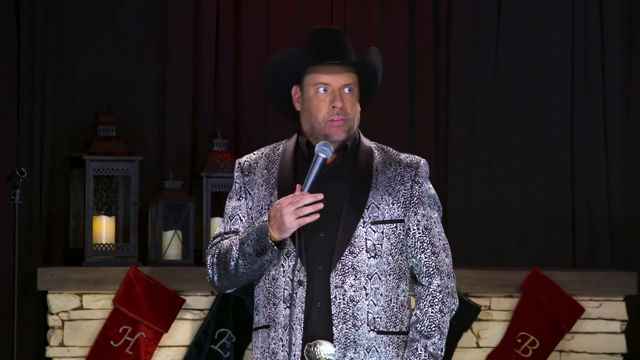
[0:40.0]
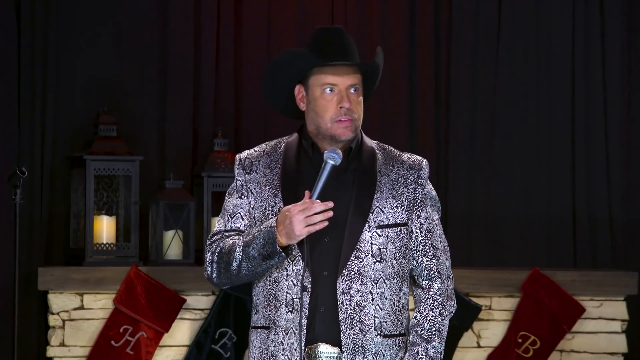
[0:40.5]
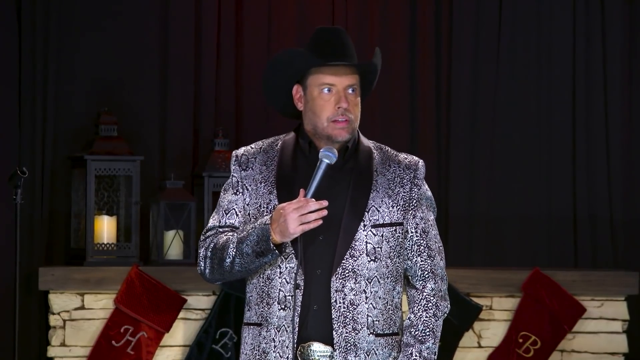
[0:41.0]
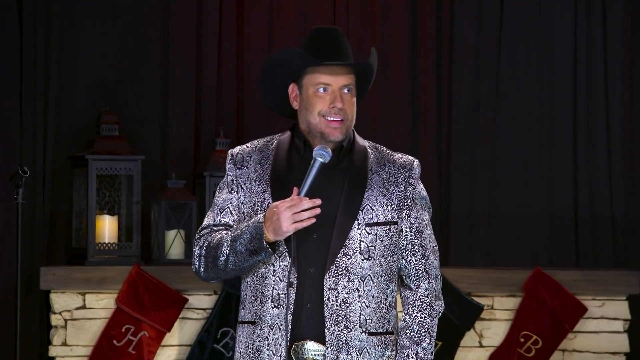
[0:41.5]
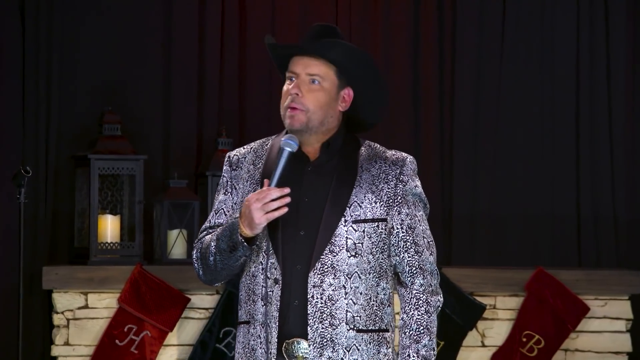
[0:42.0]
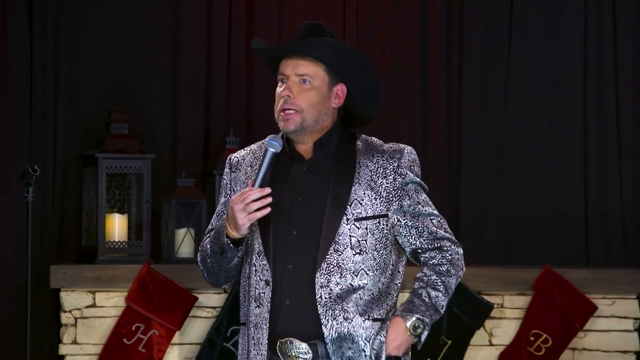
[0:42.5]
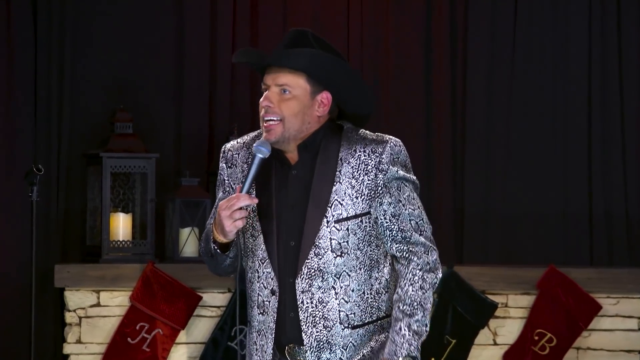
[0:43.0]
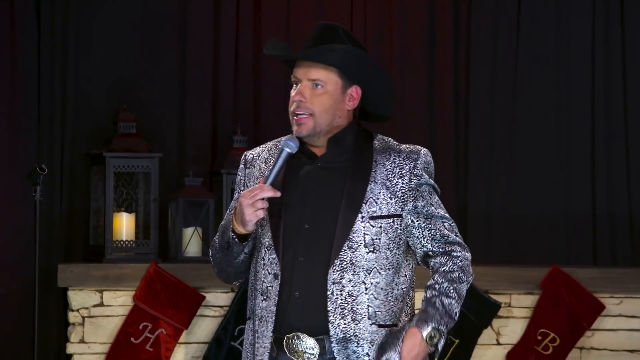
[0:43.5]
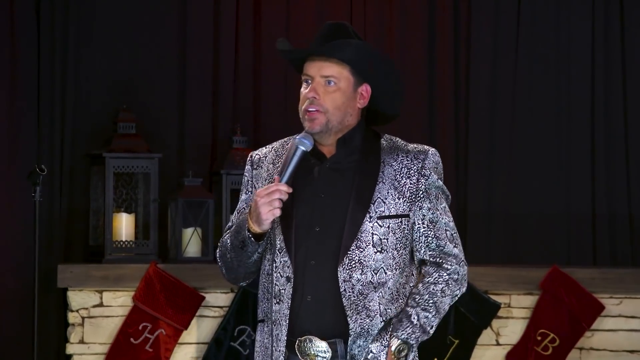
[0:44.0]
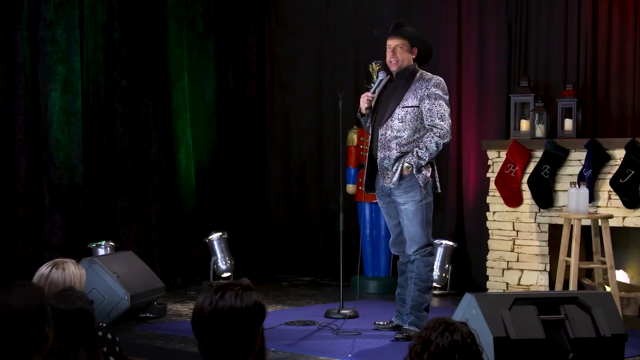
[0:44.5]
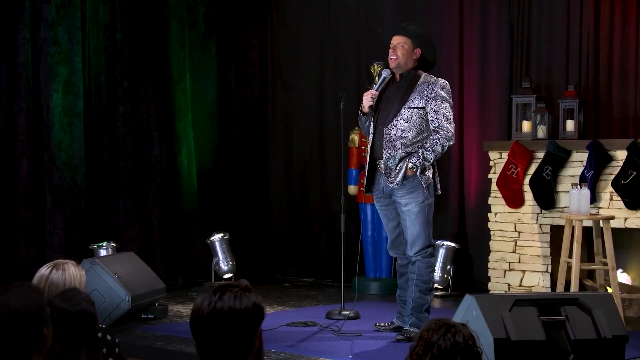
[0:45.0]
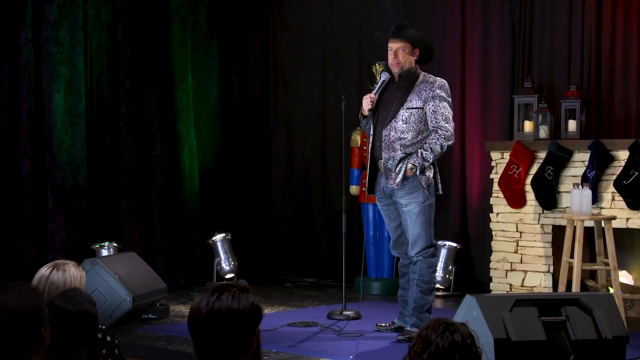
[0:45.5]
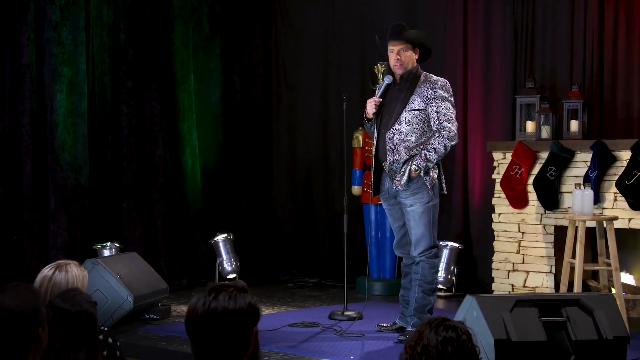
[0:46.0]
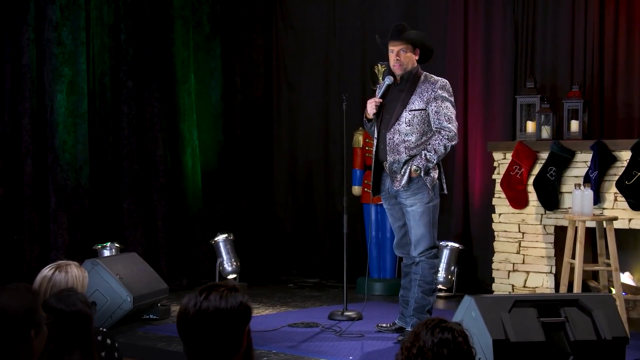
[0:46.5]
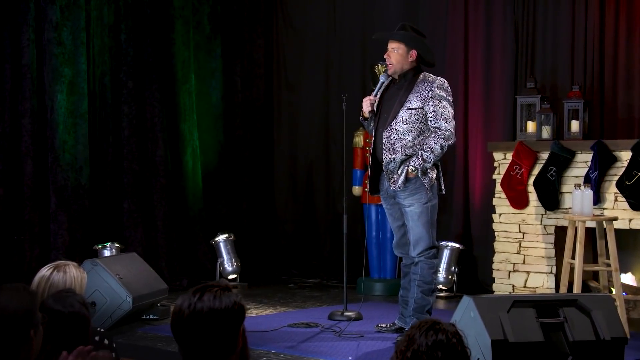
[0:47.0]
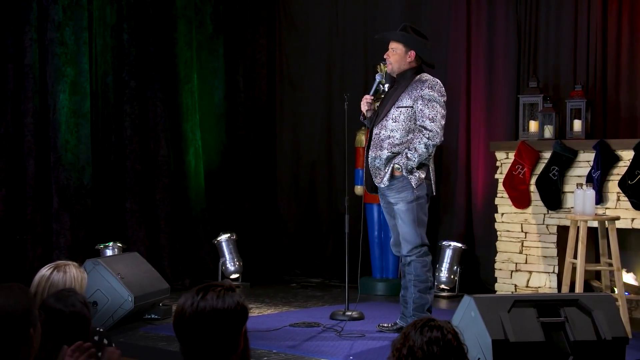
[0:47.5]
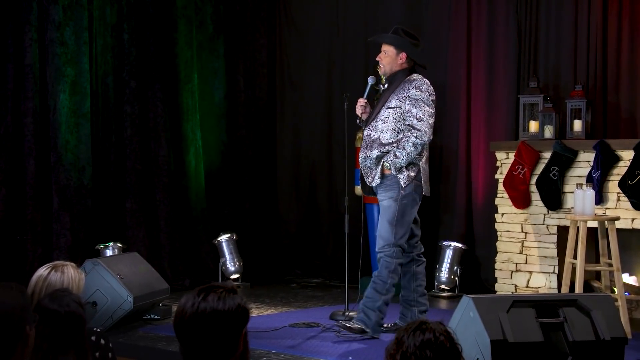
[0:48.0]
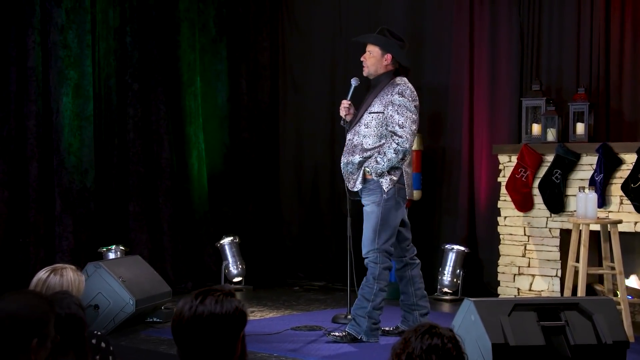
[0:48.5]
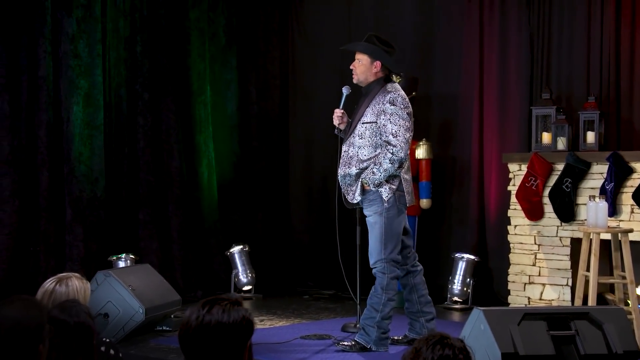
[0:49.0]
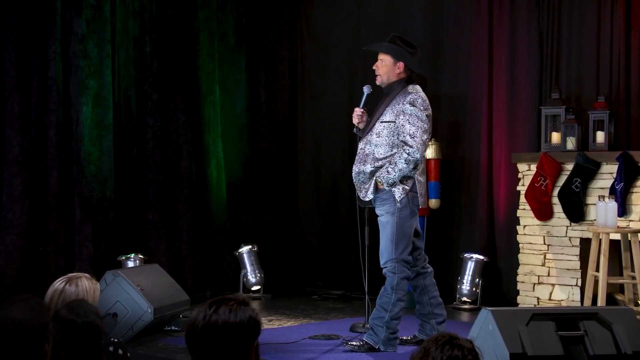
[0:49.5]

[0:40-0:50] The man continues to speak near the socks, his mouth moving up and down. He appears uncertain at first, but then he takes a deep breath, opens his eyes and becomes more sure and confident. He is behind a wooden deck made of pieces of wood on the floor, with pieces of stone supporting the wood floor. The pieces of stone appear to be broken off and cut as part of the design holding the wood together.